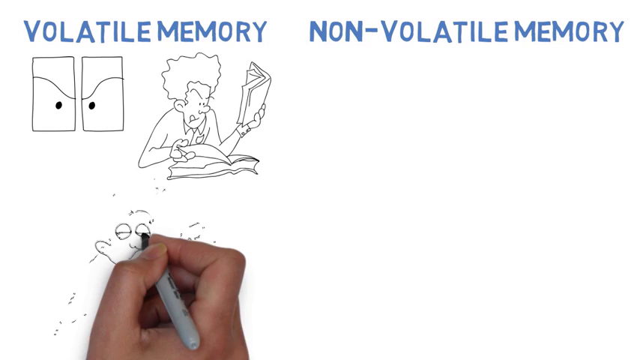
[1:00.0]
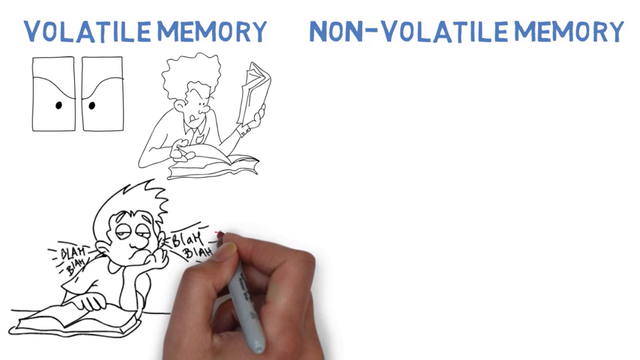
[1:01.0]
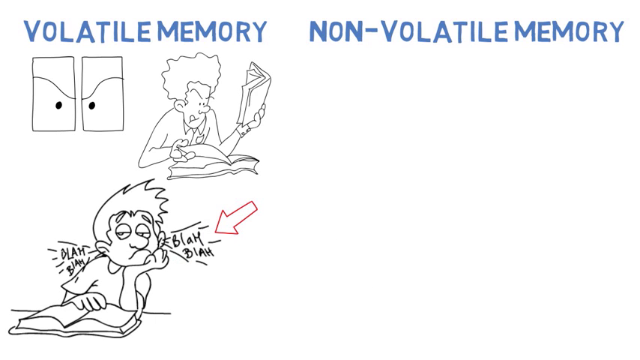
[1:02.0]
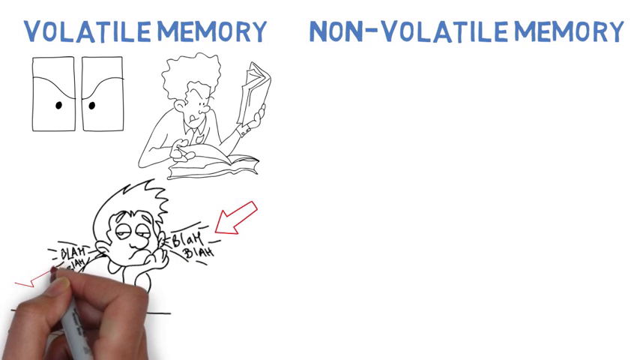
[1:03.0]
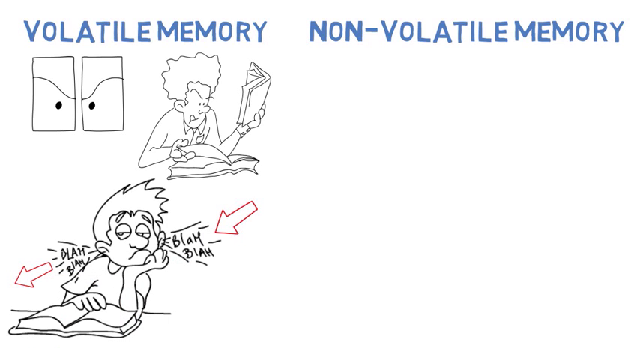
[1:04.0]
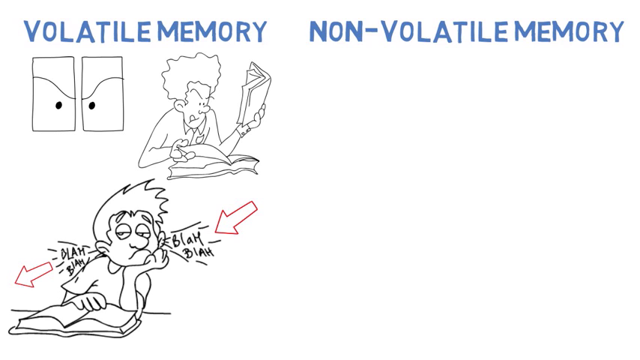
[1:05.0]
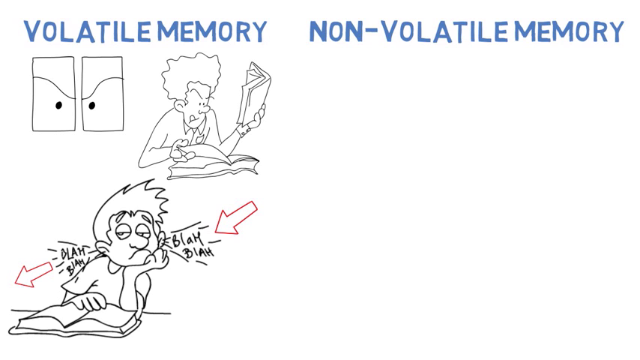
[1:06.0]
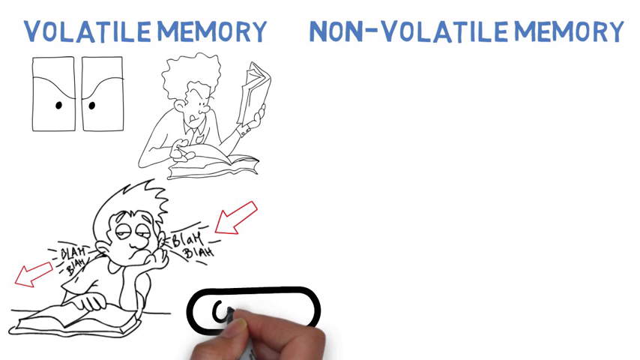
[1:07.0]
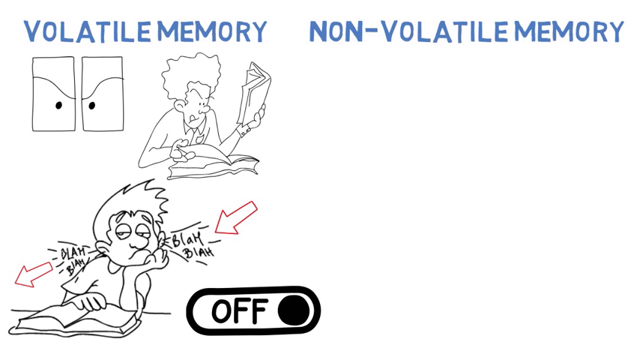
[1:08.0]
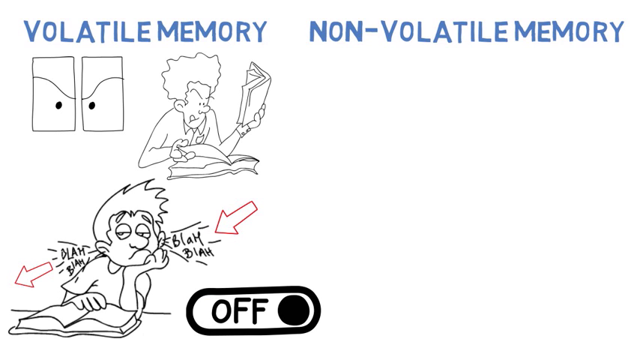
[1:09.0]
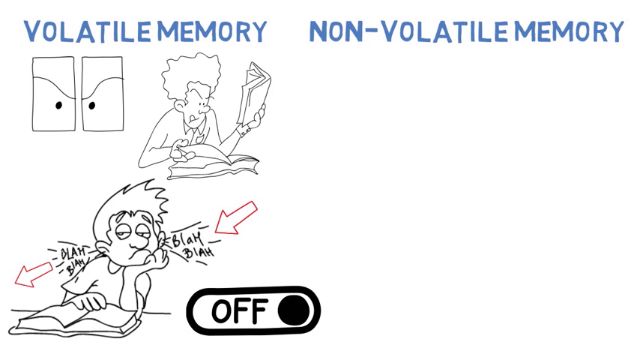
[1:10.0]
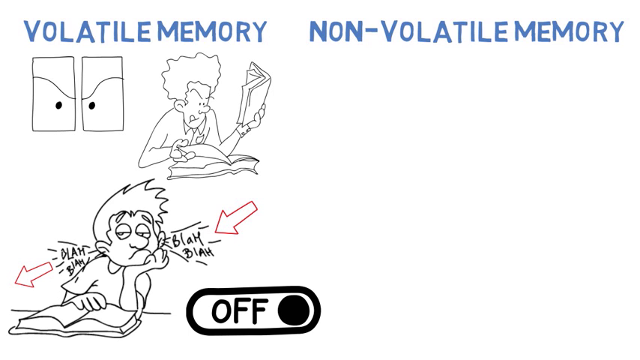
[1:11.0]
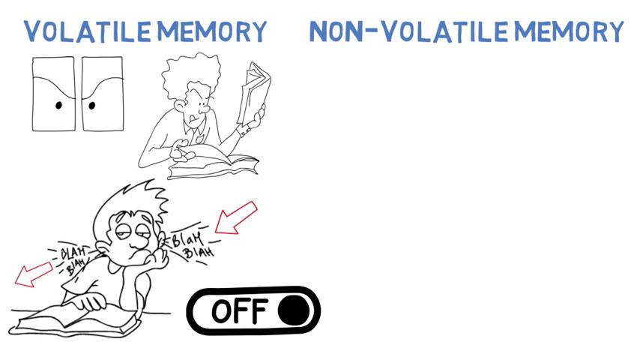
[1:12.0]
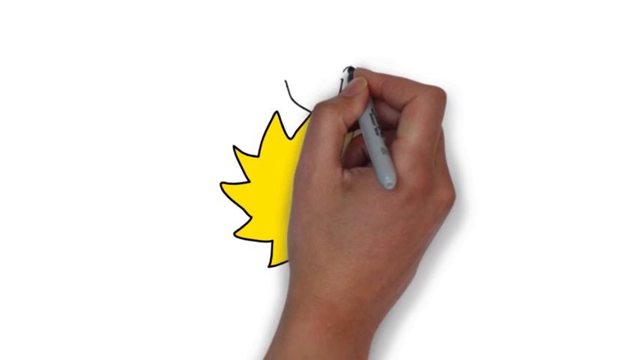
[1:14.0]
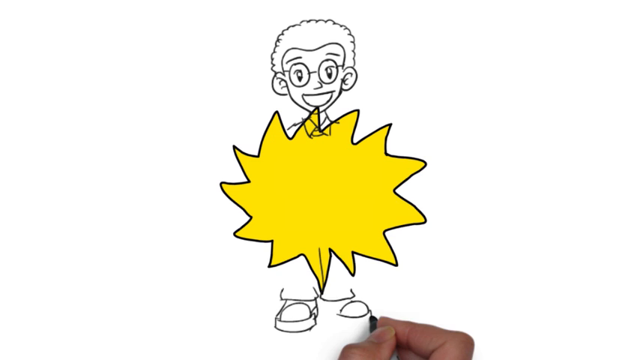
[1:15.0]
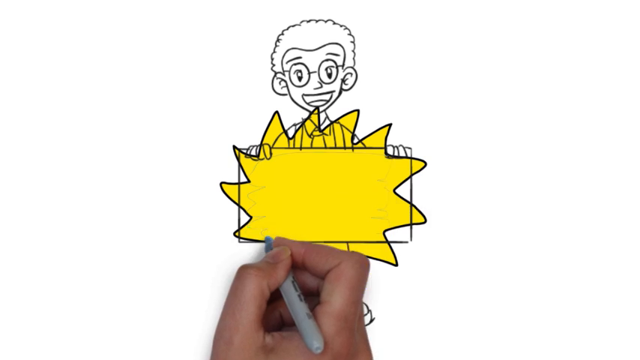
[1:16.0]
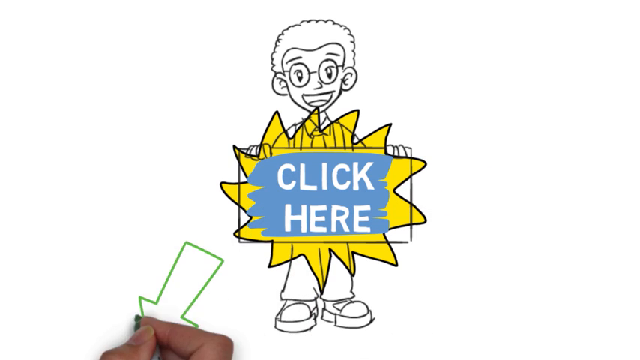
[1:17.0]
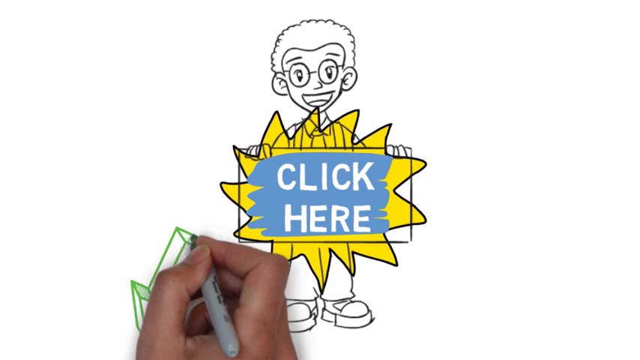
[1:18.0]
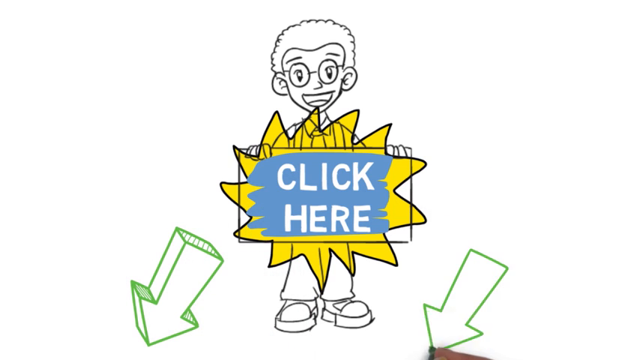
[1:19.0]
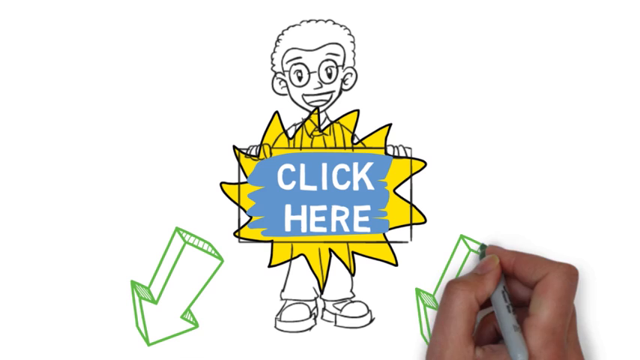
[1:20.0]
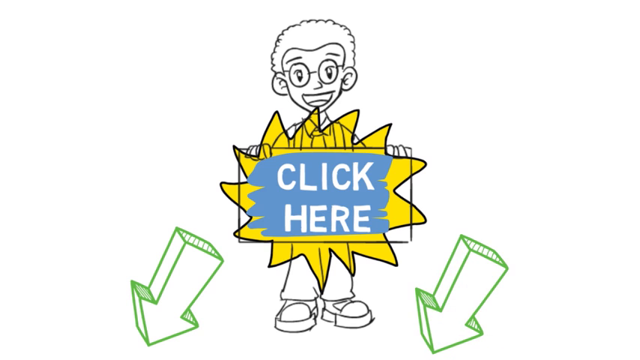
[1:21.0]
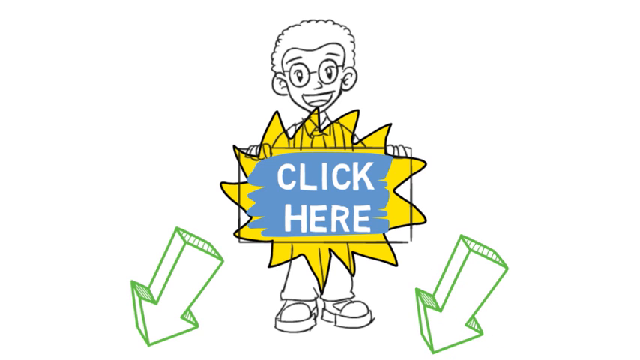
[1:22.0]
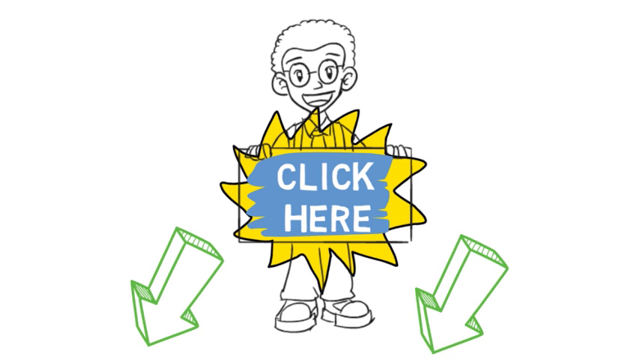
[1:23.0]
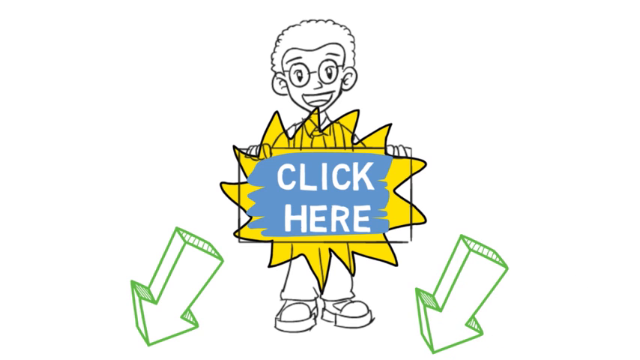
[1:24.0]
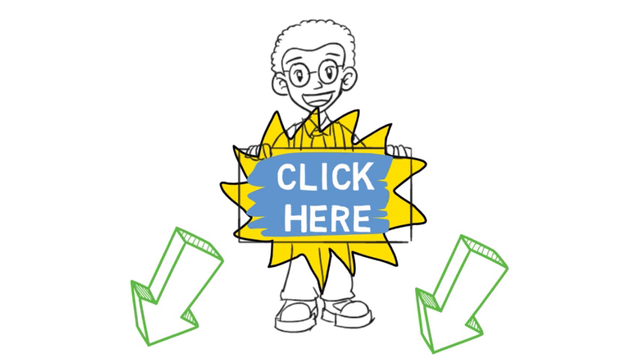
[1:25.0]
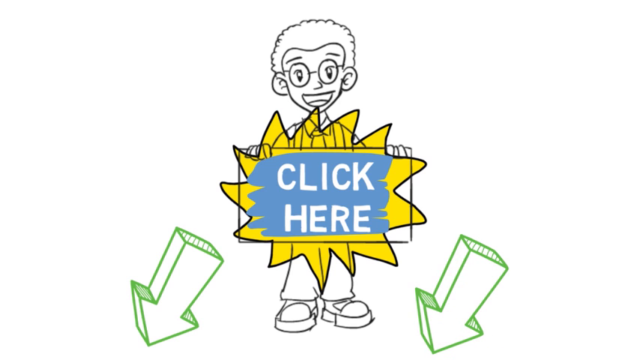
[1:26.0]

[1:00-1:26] The drawings continue. The hand draws another cartoon person in the lower left corner, holding its chin in one hand while the other hand rests on an open book on the surface. The cartoon's hair is untidy, and words that look like what the cartoon is hearing read "blah, blah" at the left ear and "blah, blah" at the right ear, showing the "blah, blah" going into the left ear and coming out of the other ear. The word "off" is written inside a rectangular shape with curved corners, with a big black dot. The hand then draws another cartoon figure holding a yellow star, with a blue board in front of the star bearing white text that reads "click here". Two green arrows are drawn on both sides of this figure. The cartoon looks like a nerdy child with glasses and shoes.